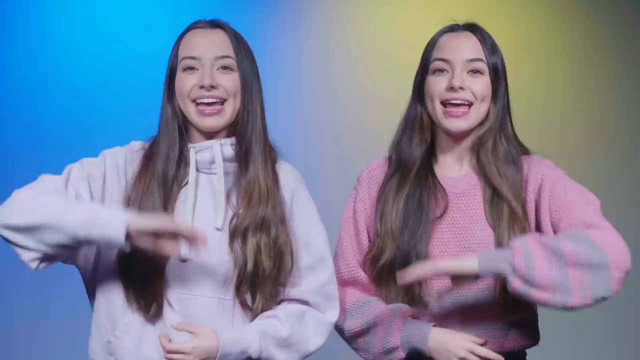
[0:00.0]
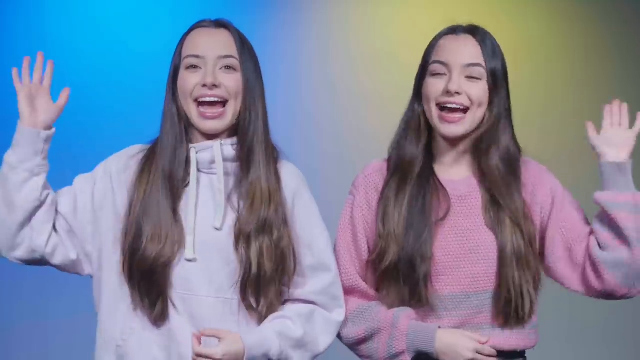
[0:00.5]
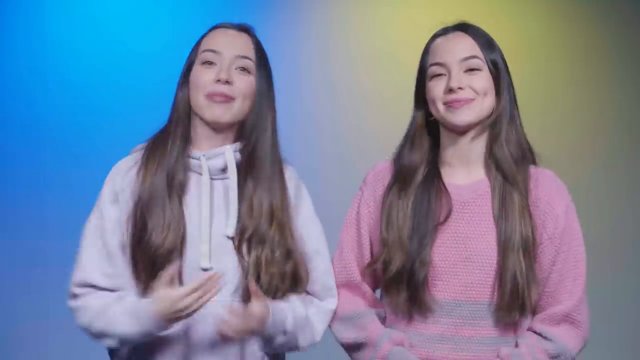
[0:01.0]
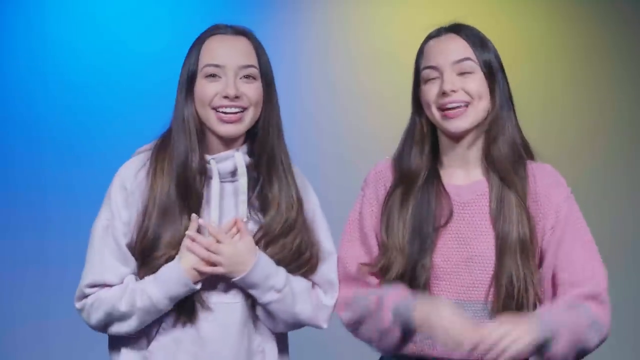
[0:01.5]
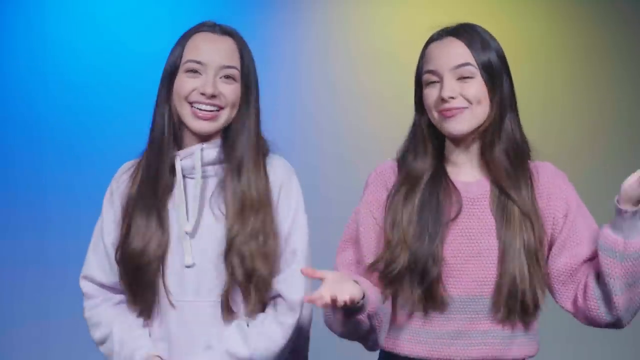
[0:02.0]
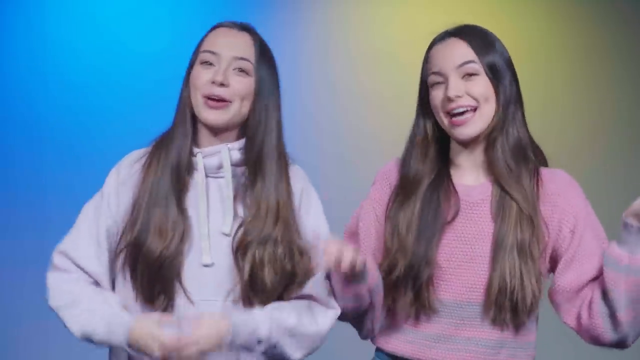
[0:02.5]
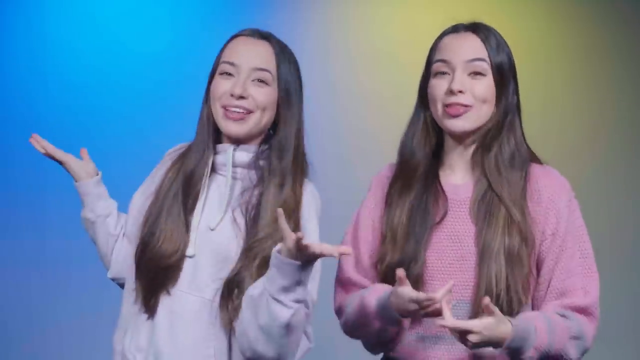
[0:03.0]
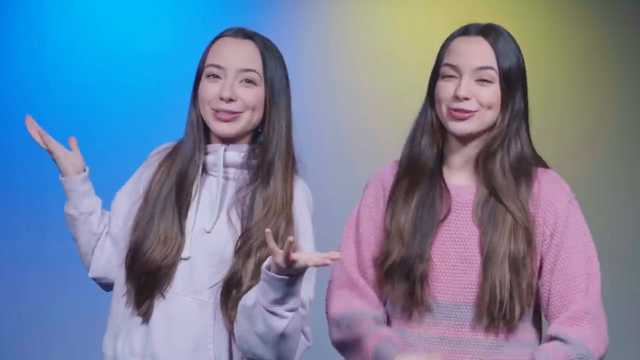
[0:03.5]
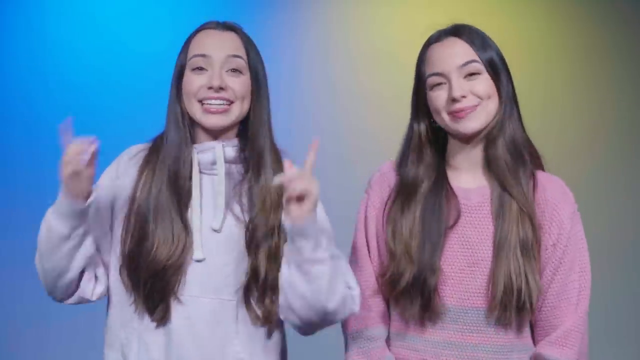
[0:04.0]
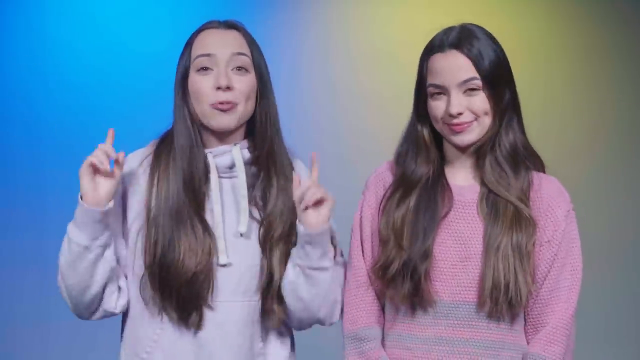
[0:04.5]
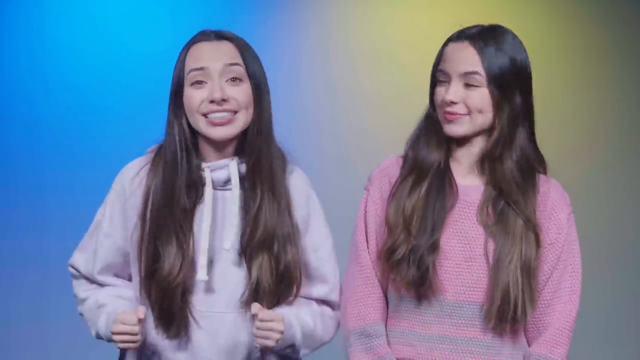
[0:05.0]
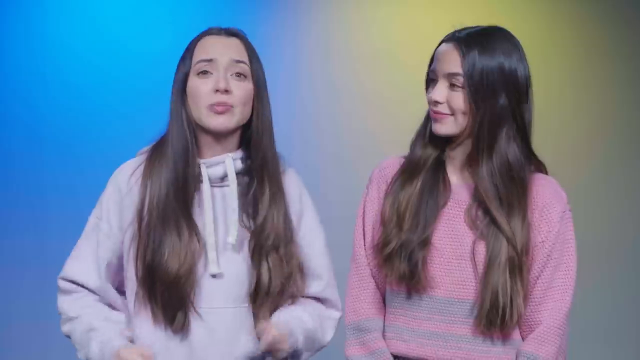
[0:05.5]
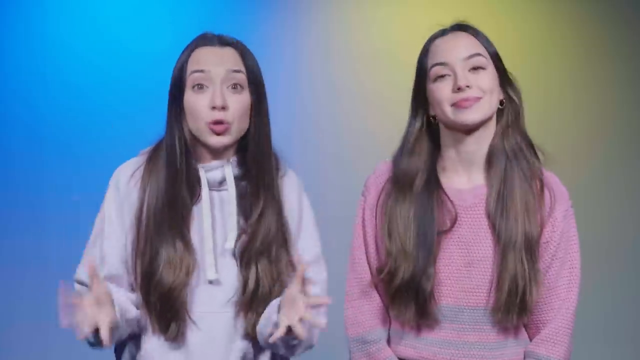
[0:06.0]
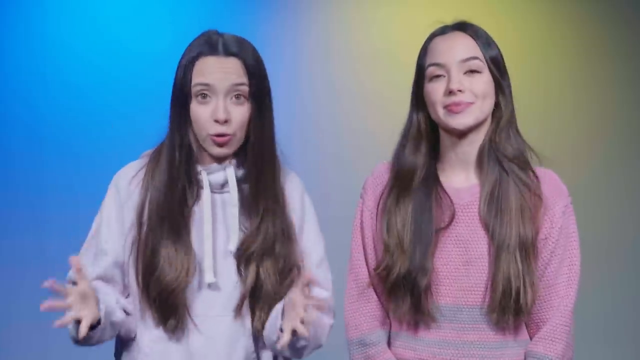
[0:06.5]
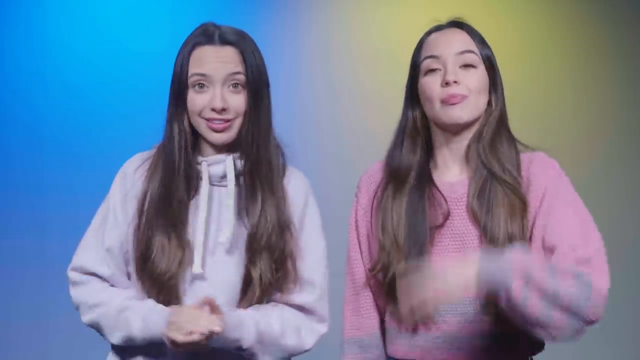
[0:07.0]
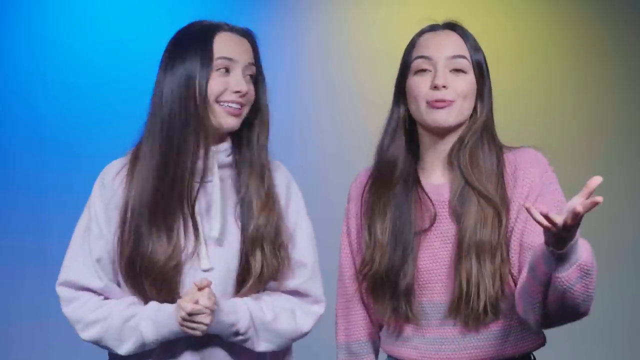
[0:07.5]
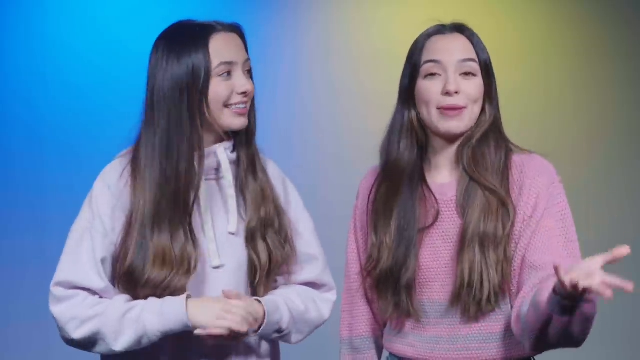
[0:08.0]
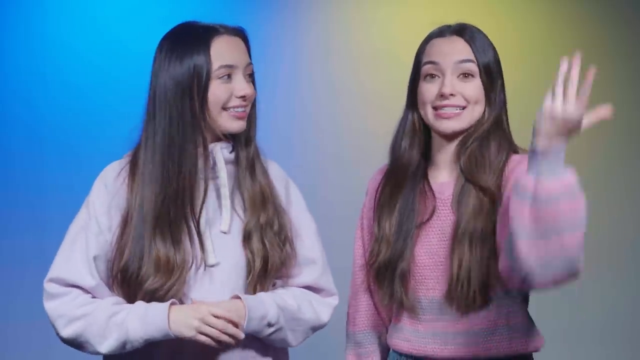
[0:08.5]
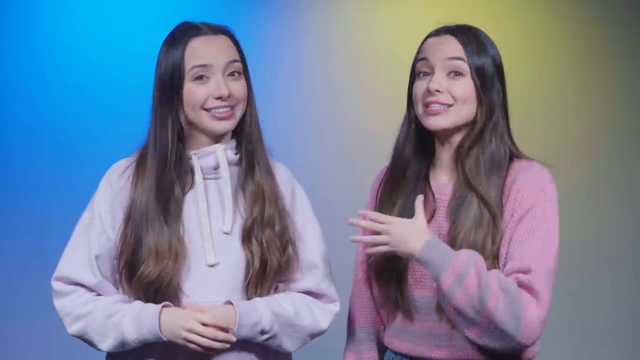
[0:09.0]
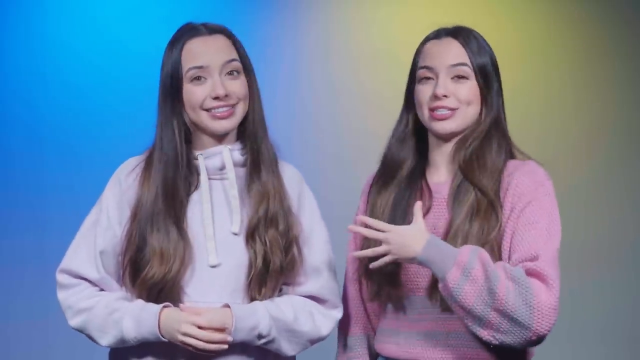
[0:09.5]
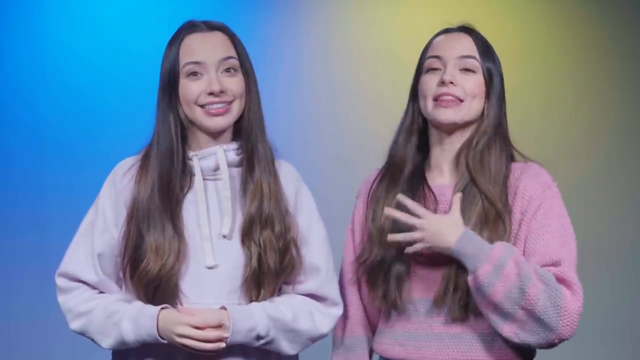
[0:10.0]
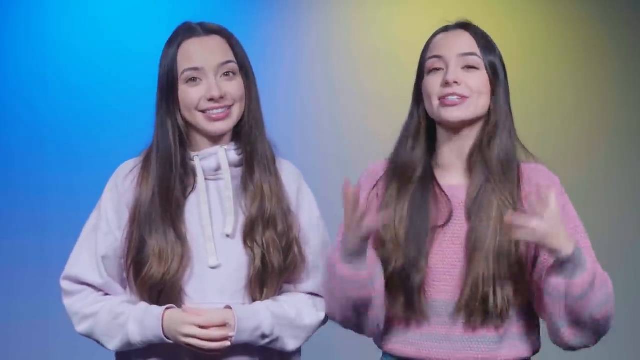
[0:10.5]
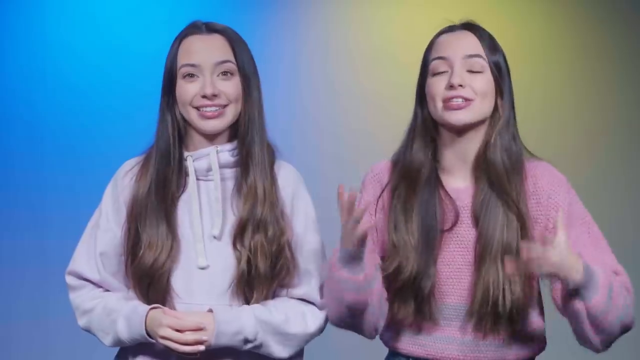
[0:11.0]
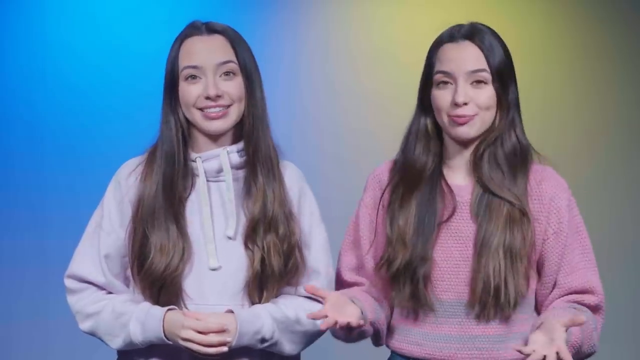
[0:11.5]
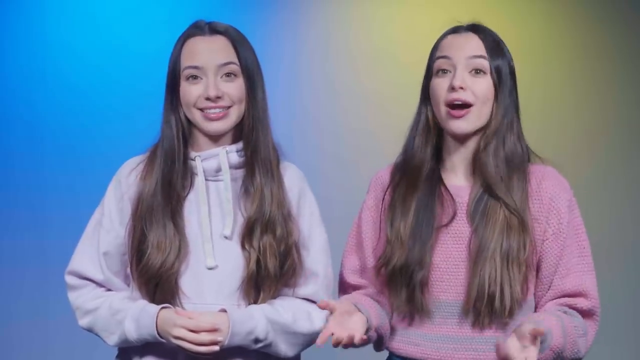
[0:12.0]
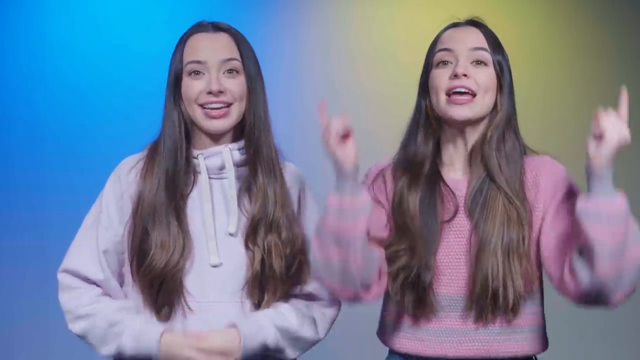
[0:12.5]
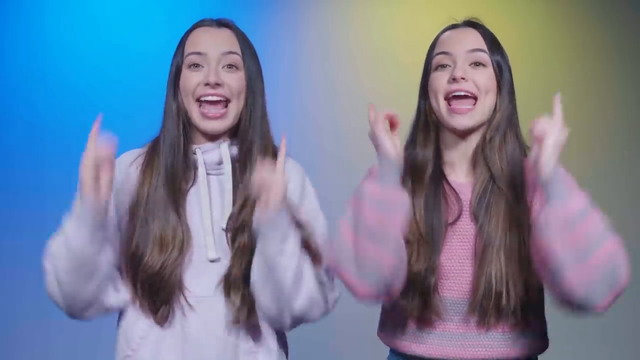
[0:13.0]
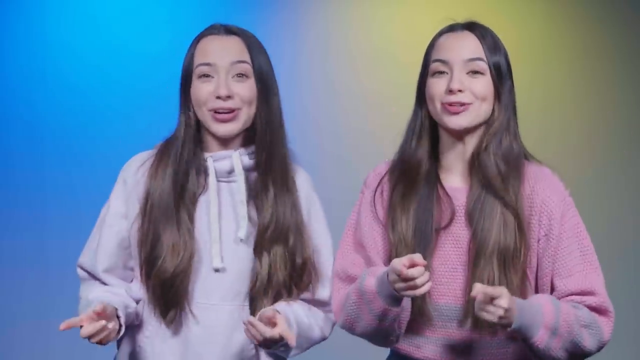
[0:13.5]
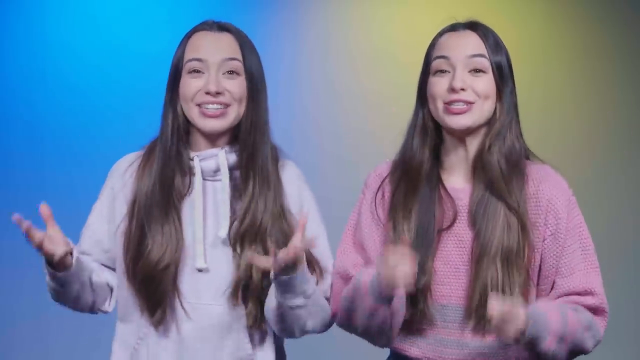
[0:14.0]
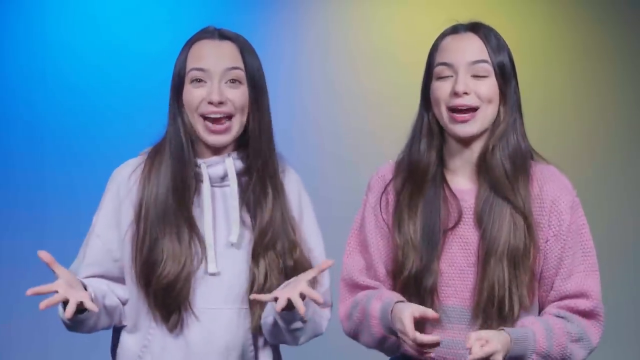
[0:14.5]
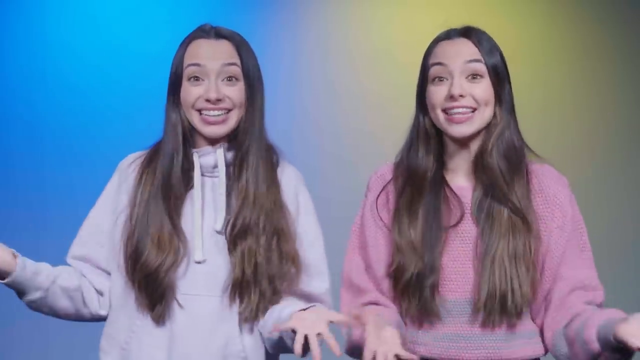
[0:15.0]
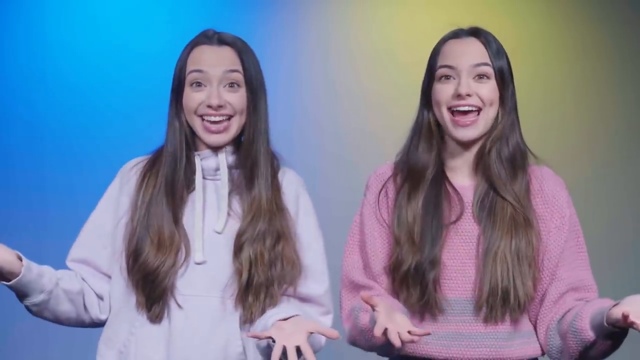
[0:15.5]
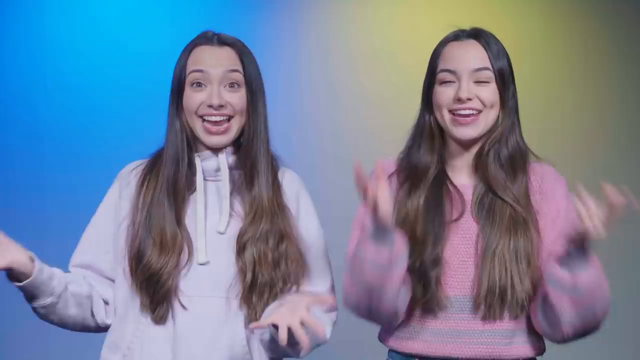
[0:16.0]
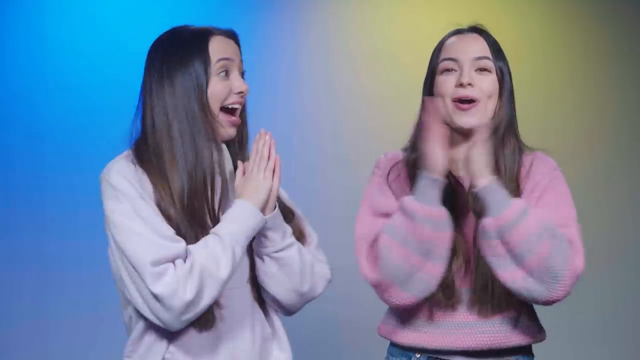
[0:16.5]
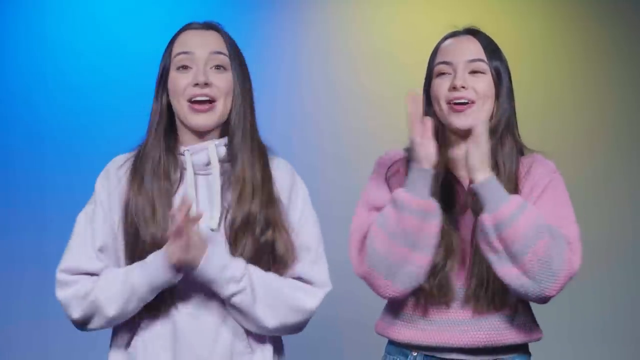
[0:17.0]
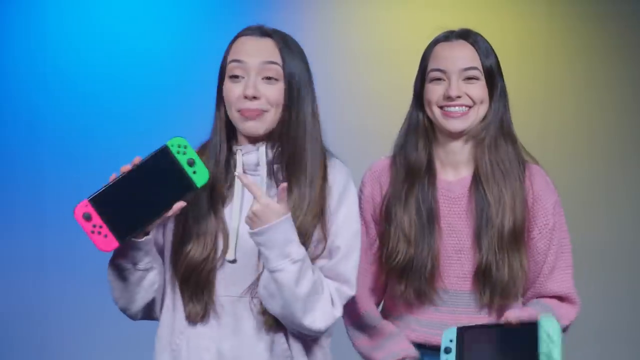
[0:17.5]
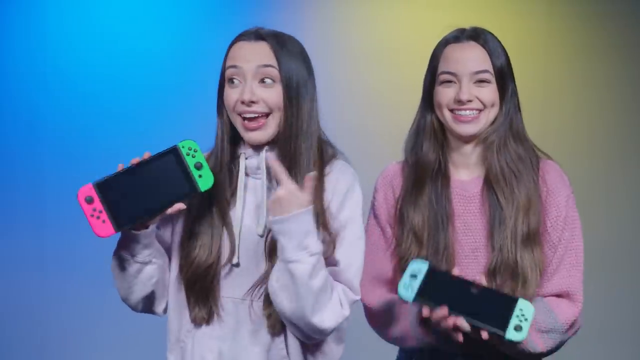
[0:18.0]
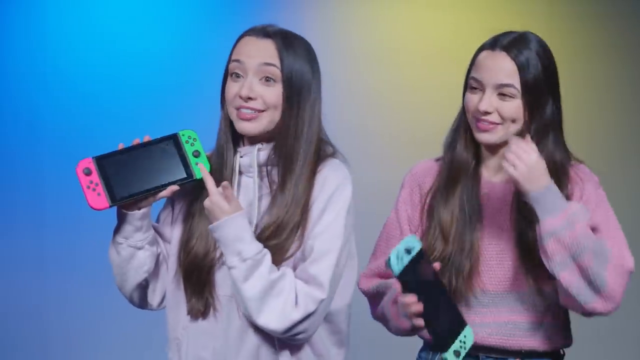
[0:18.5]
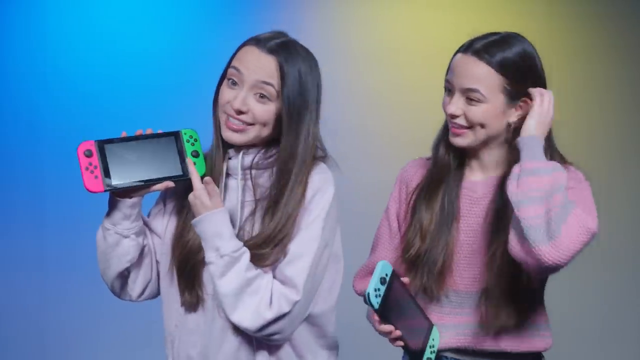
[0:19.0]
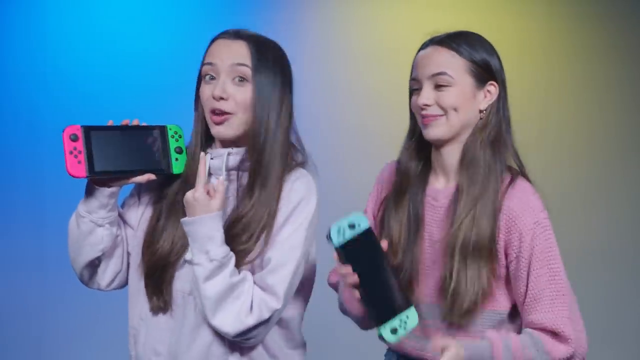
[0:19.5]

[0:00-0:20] The video focuses on two women who appear to be in their early twenties. The one on the left wears a pink pullover and the one on the right wears a purple pullover. They are very excited and look like they are talking about something exciting; their white teeth, facial expressions, hand gestures and long hair are clearly visible. Toward the end of the shot, each of them holds up a device, probably a gaming device, displaying it happily.